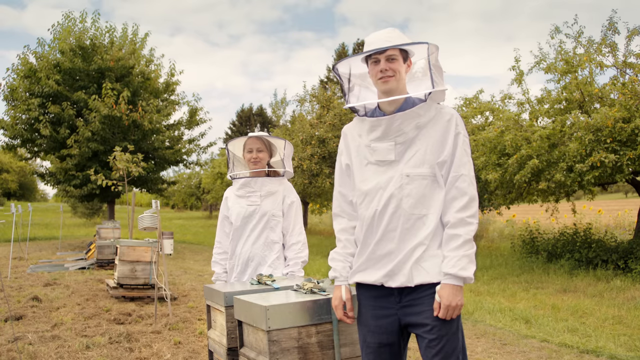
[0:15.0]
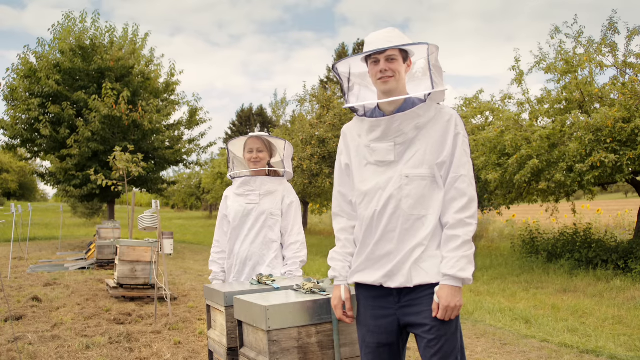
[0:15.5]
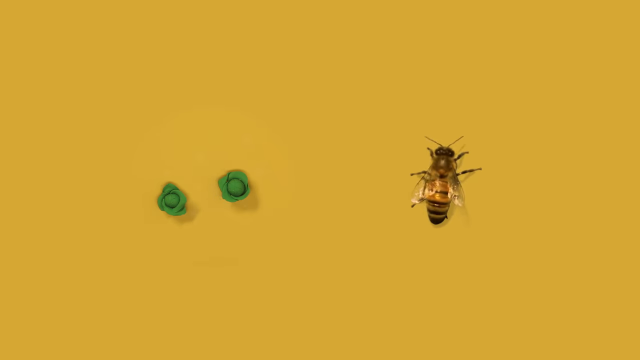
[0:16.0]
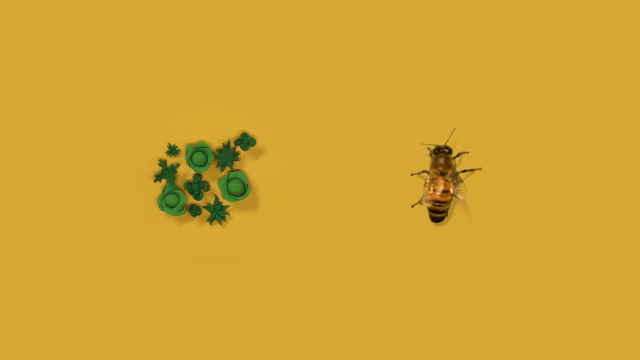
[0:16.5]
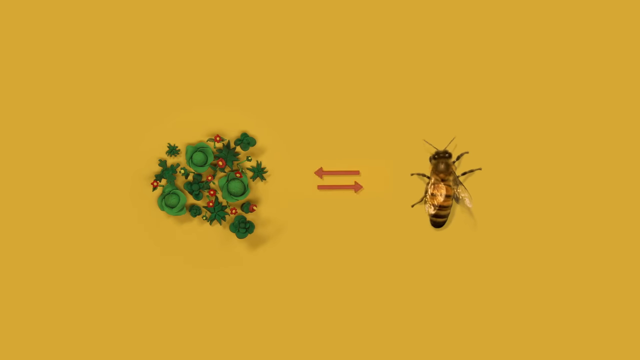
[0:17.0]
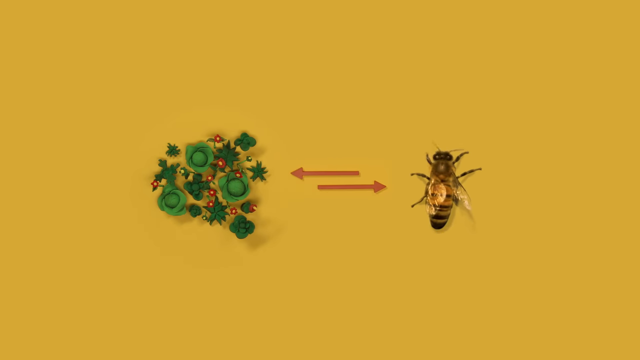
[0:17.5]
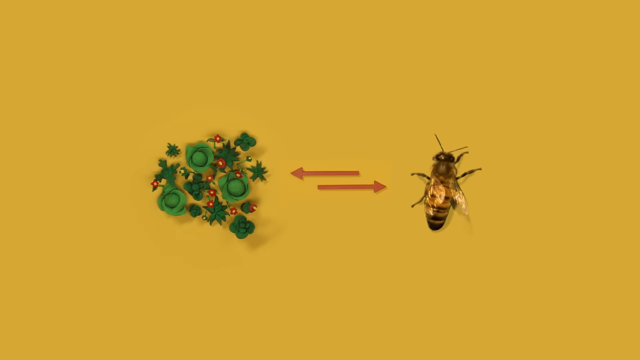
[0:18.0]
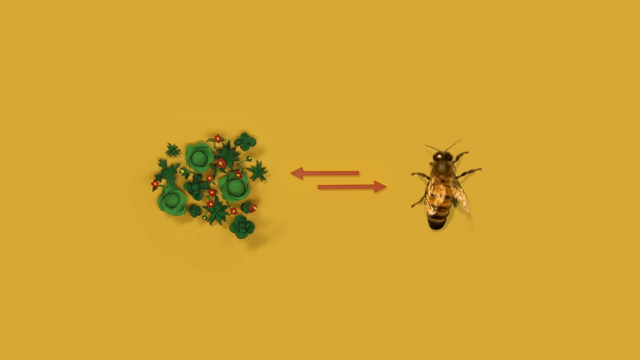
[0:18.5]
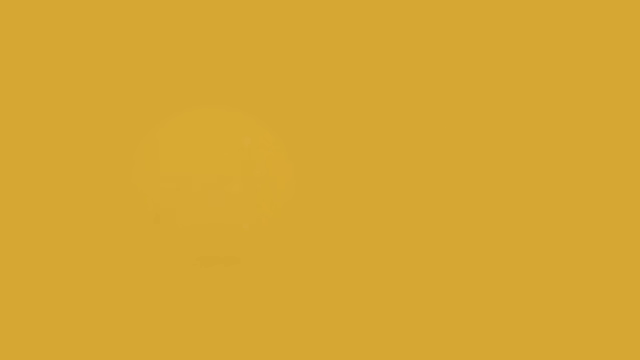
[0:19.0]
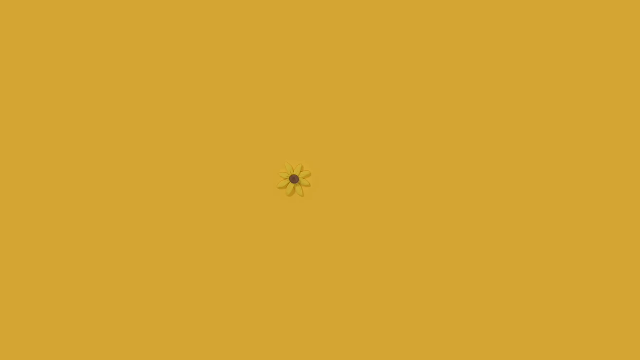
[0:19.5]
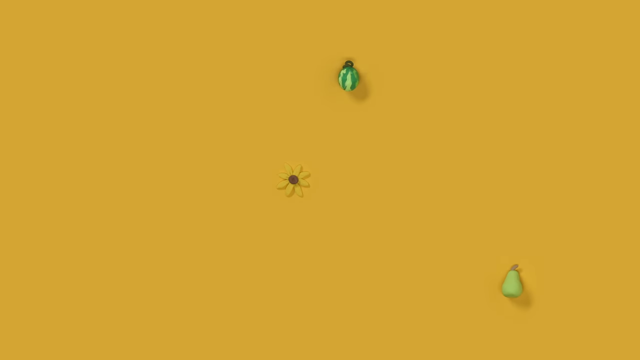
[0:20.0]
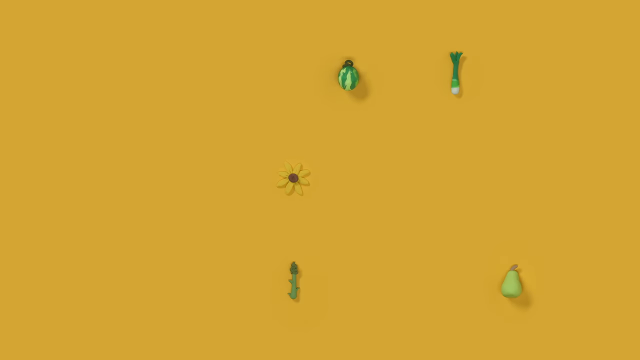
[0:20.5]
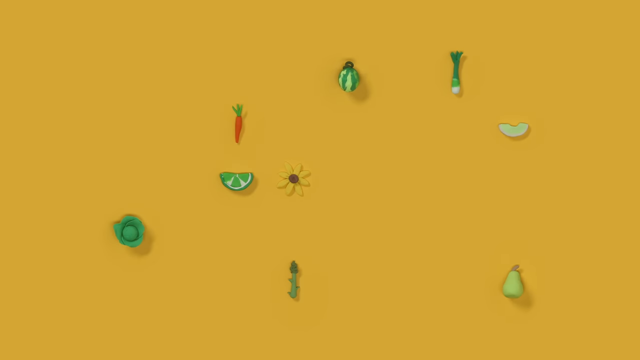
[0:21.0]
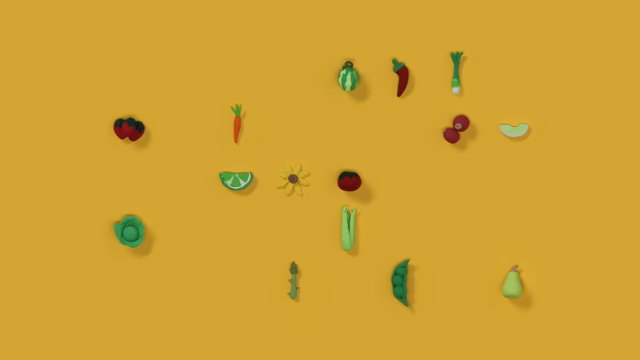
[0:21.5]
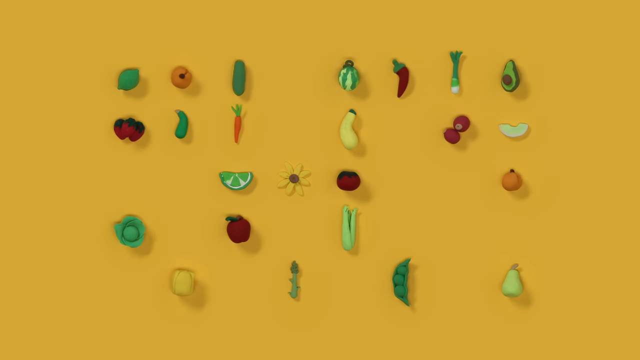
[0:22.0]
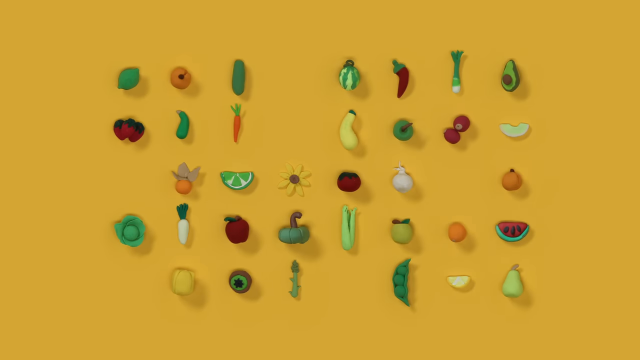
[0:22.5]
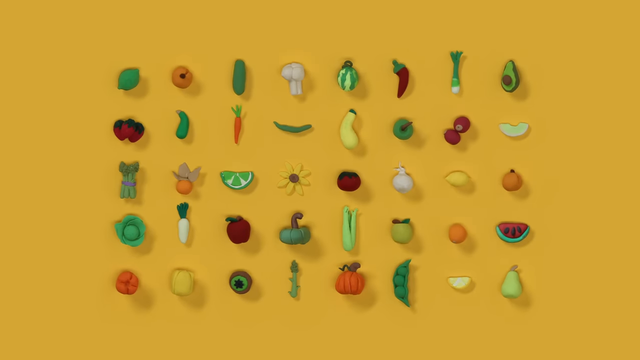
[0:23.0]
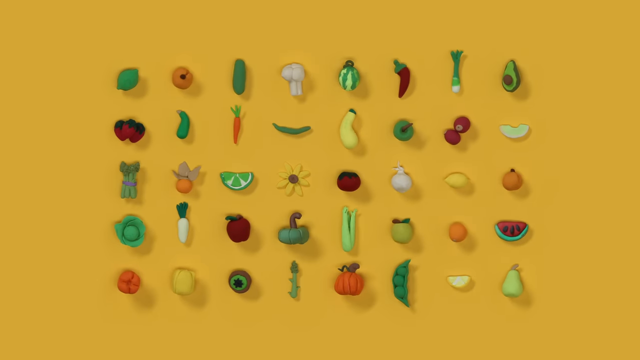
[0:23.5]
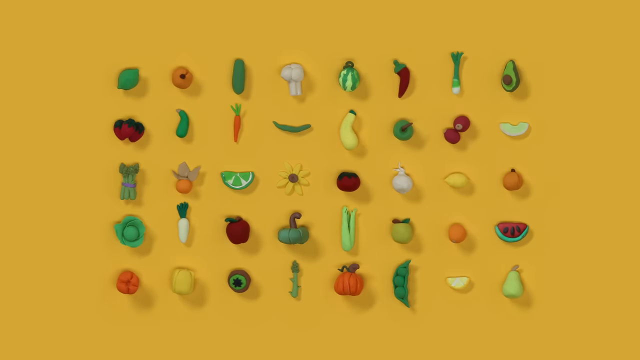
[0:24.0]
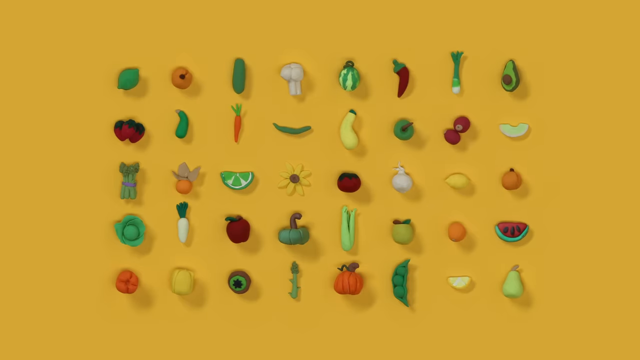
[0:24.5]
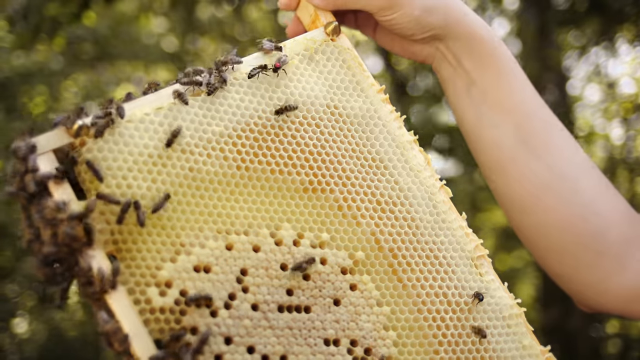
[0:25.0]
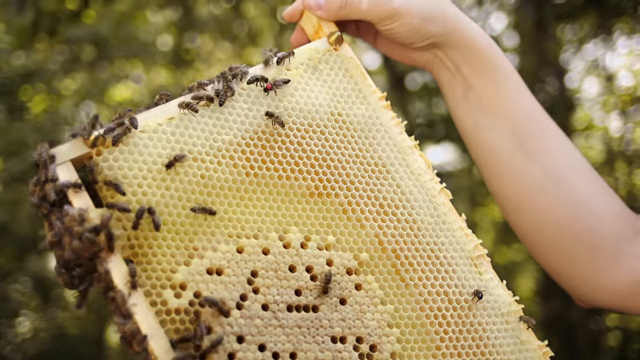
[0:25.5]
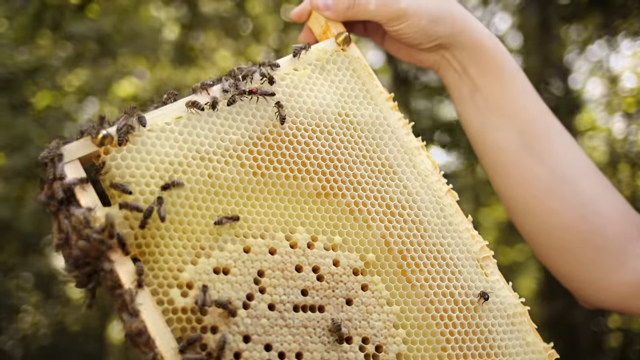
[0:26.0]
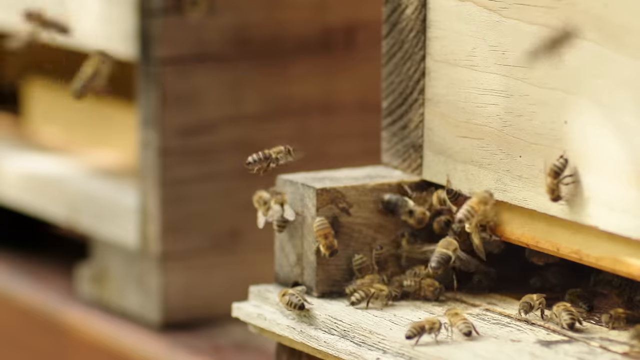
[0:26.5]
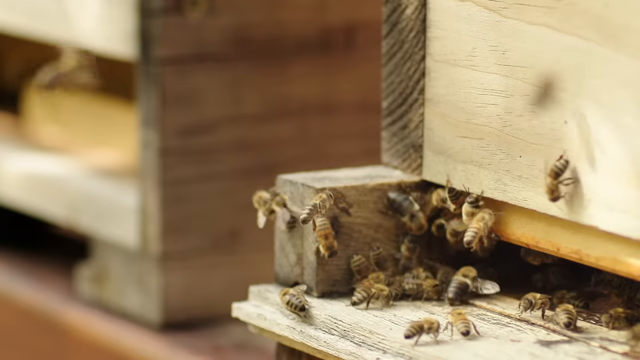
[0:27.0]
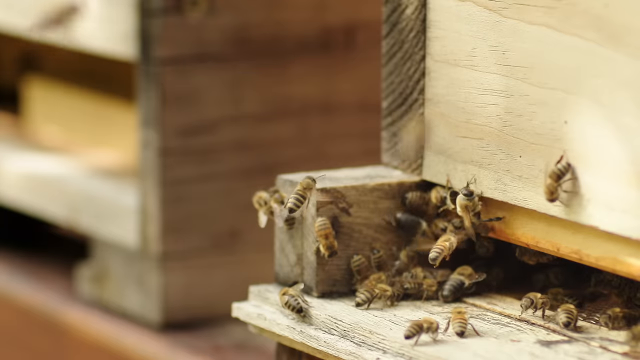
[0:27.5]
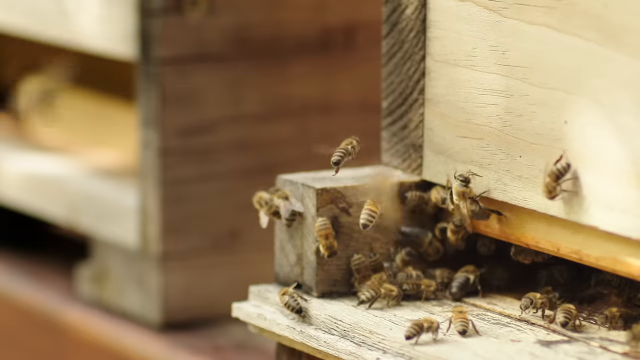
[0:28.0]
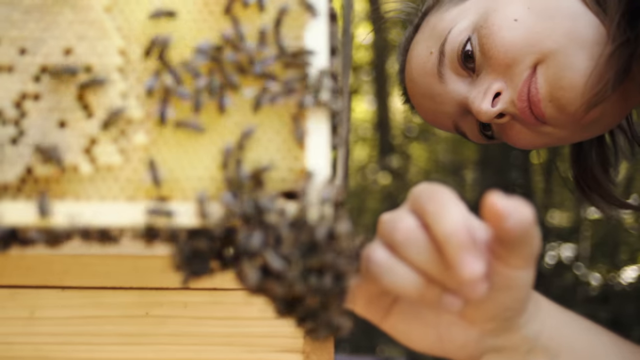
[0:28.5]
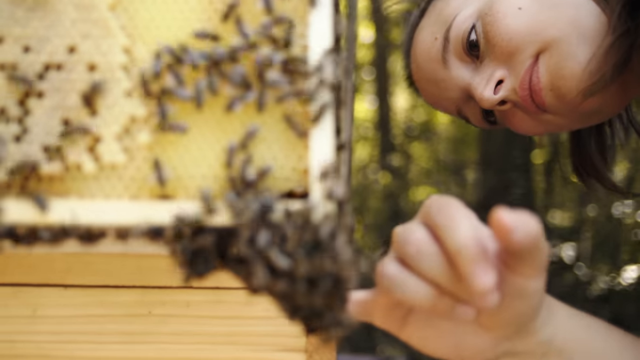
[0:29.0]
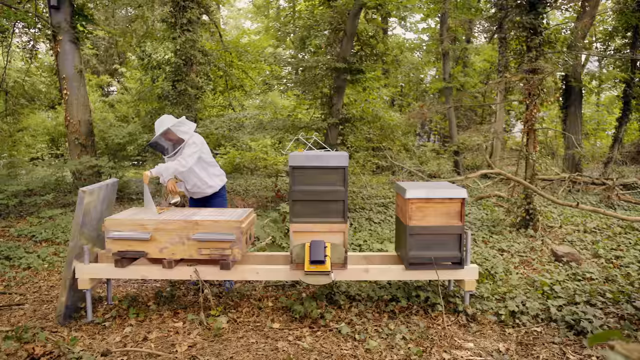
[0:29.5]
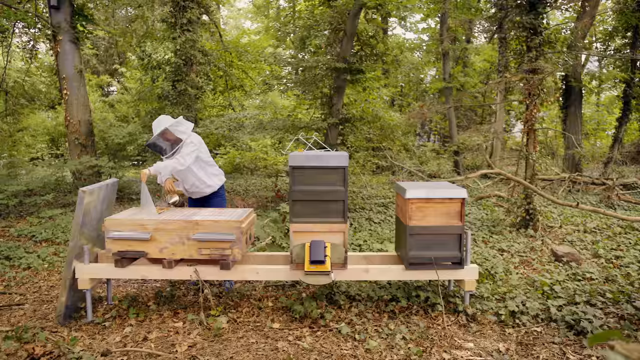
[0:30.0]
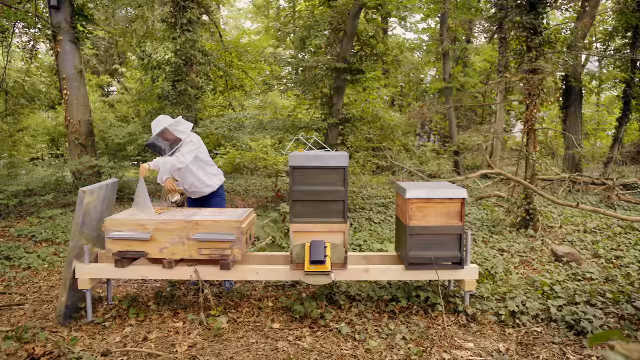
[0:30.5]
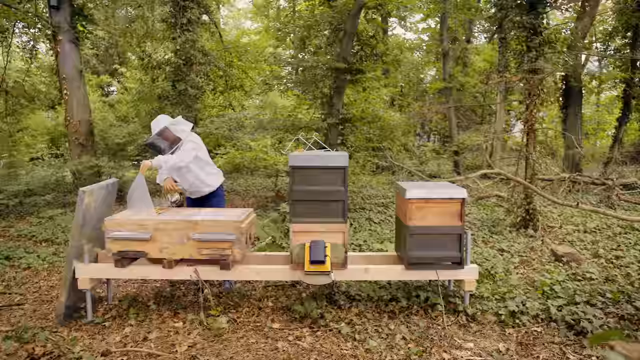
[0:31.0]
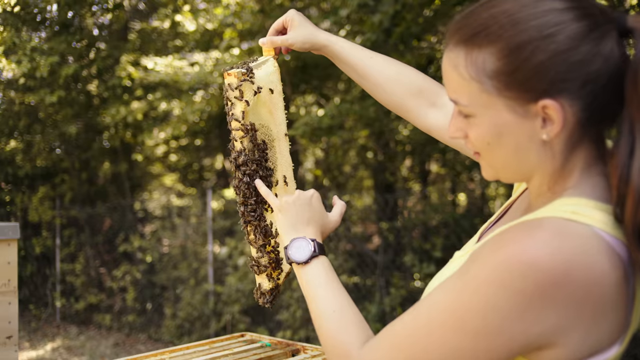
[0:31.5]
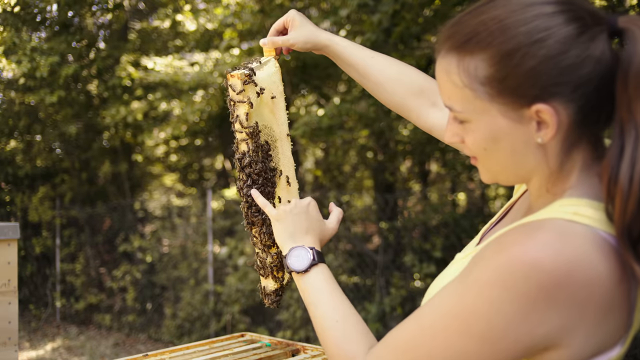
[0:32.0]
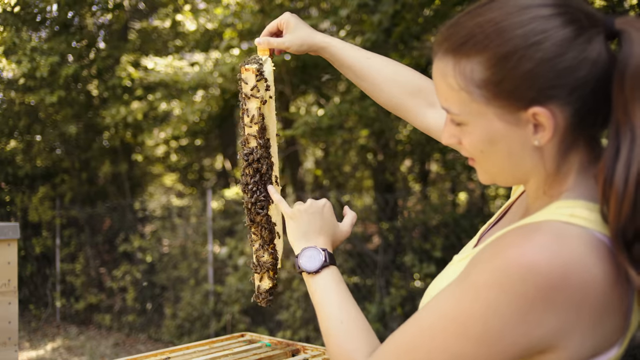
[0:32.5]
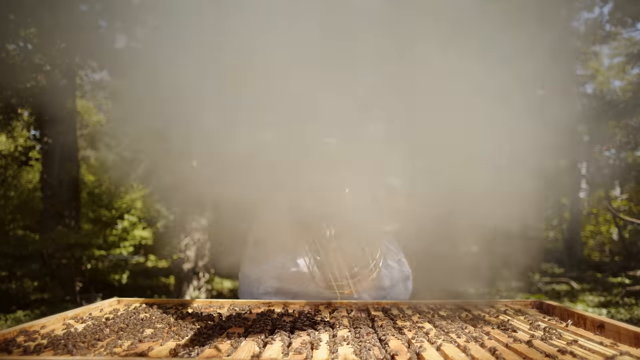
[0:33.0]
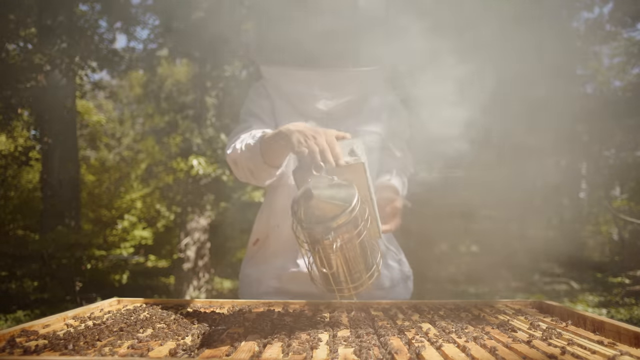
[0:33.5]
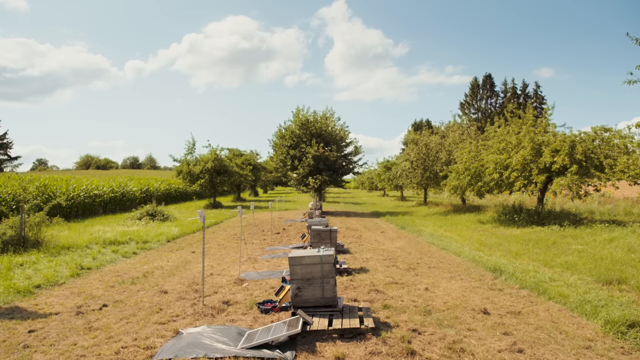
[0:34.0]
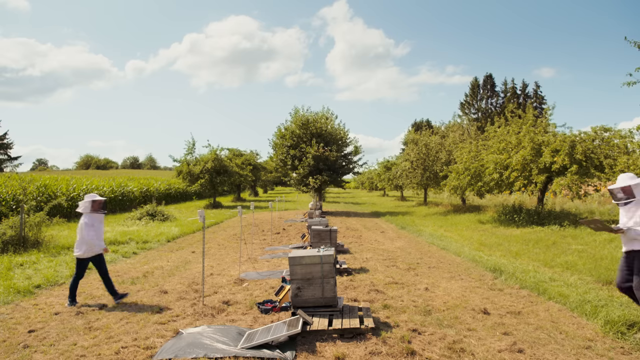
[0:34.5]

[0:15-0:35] The video cuts from the two people to some type of cartoon infographic with a range of different vegetables, from flowers to carrots to asparagus and many other types. Some type of arrow points to a bee and a flower. The view then pans out to show honeybees in their hives, in wooden boxes. Someone uses some type of instrument to blow steam or hot air on the honeybees, likely to calm them down as they get honey from the hive.